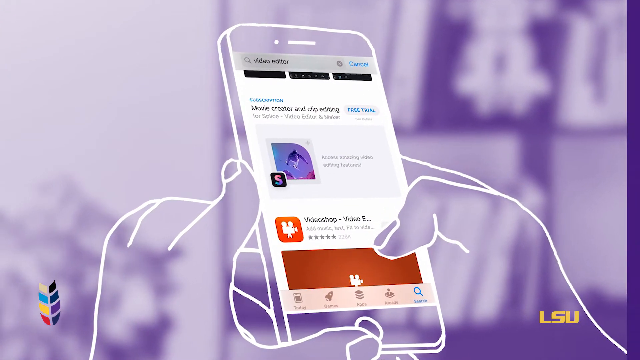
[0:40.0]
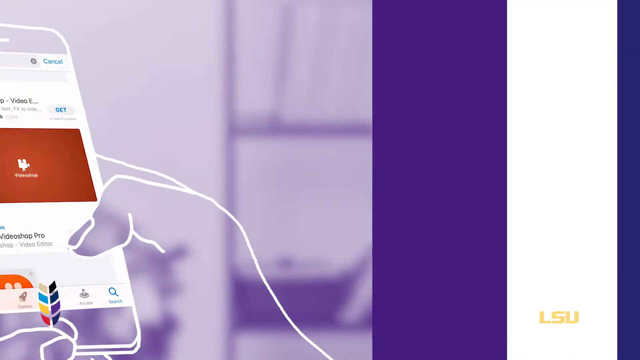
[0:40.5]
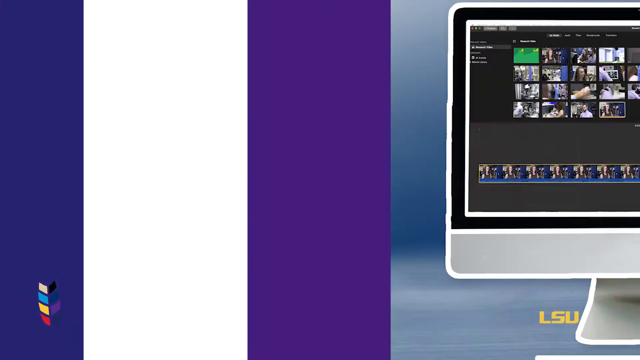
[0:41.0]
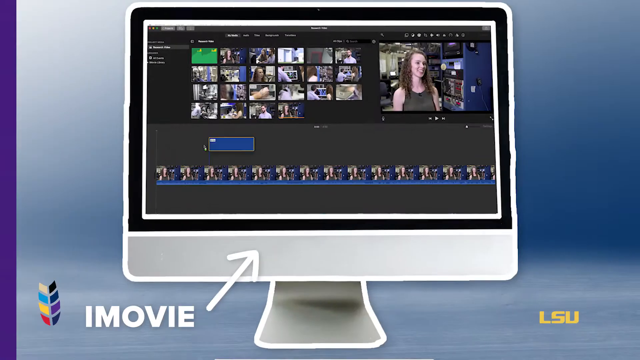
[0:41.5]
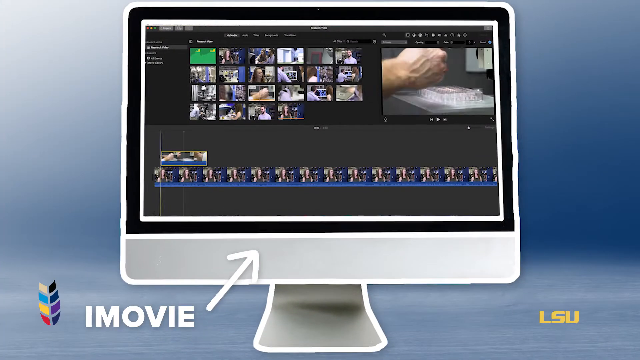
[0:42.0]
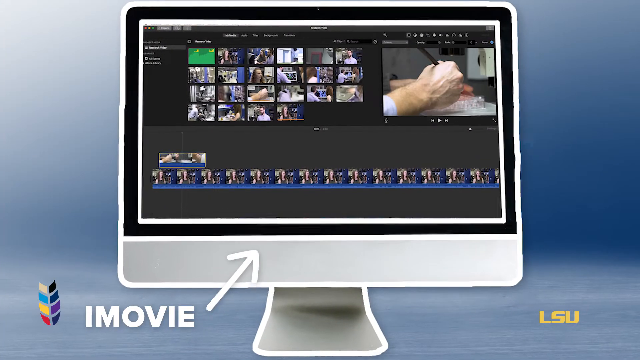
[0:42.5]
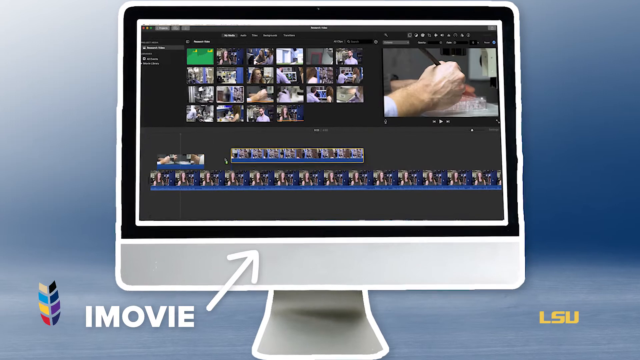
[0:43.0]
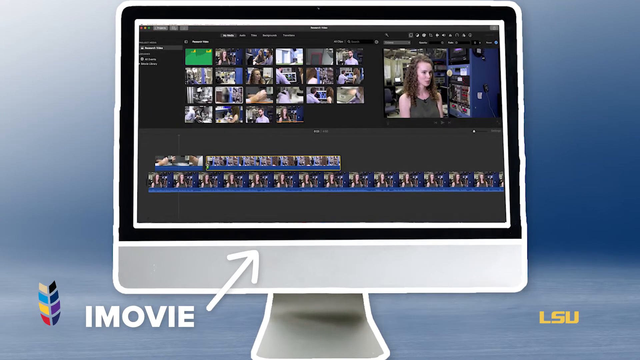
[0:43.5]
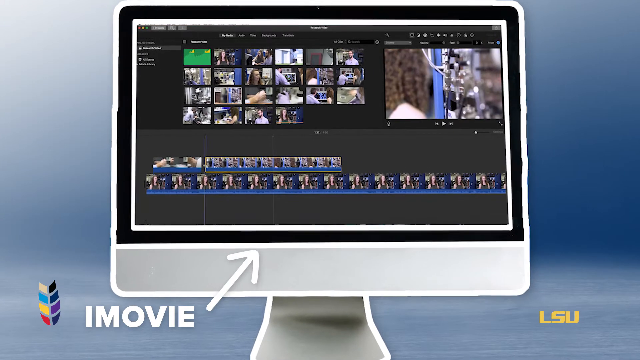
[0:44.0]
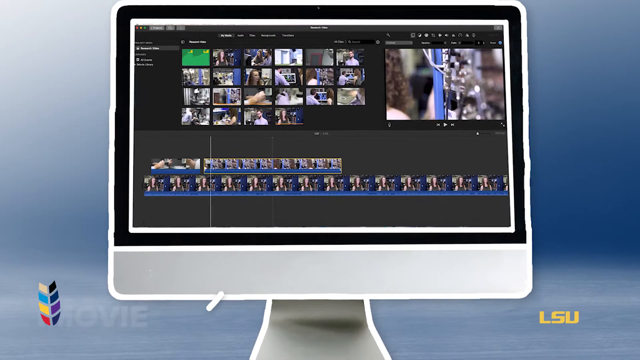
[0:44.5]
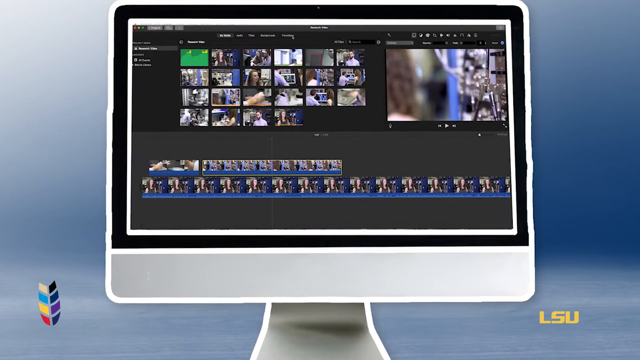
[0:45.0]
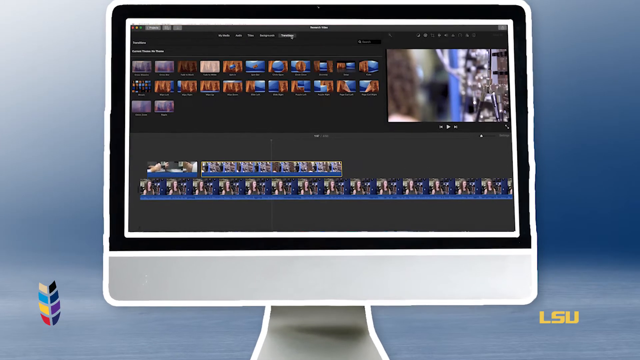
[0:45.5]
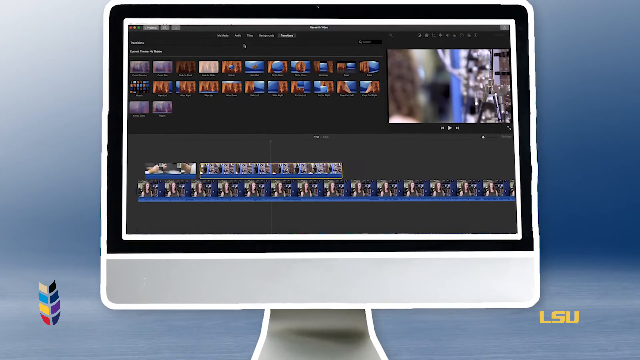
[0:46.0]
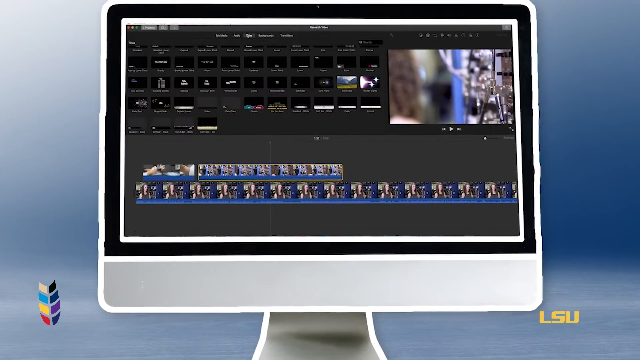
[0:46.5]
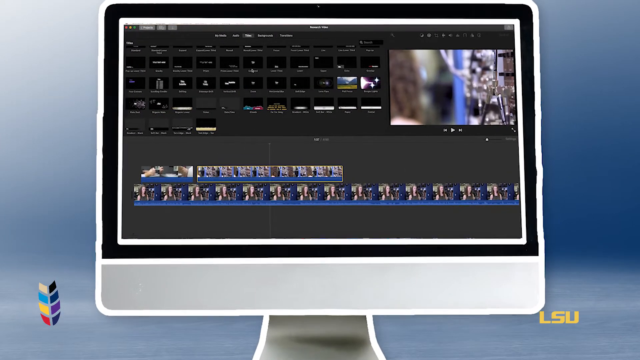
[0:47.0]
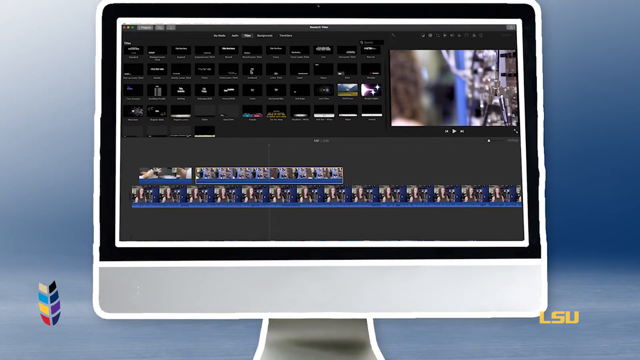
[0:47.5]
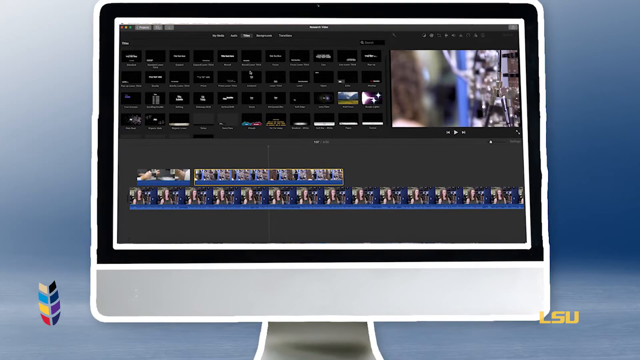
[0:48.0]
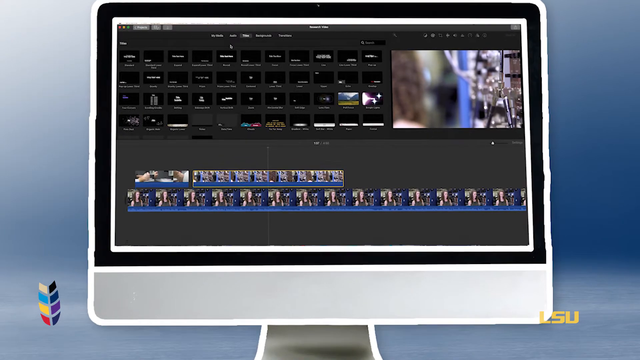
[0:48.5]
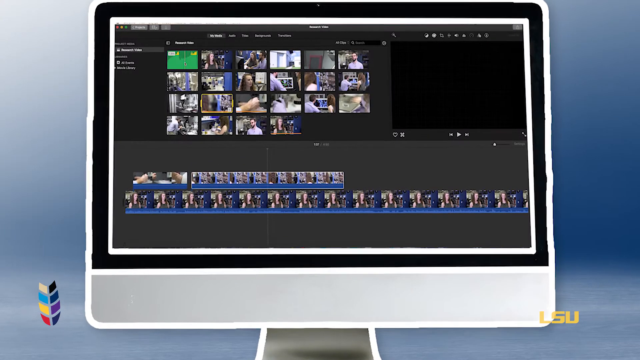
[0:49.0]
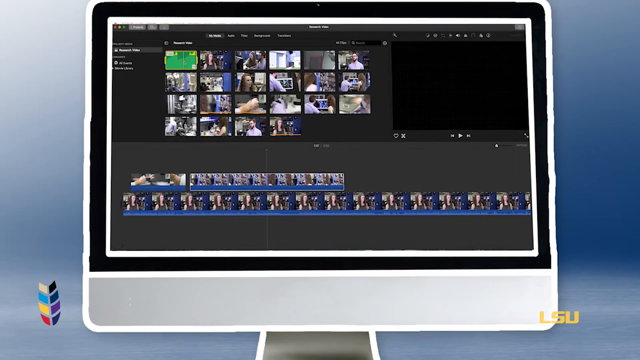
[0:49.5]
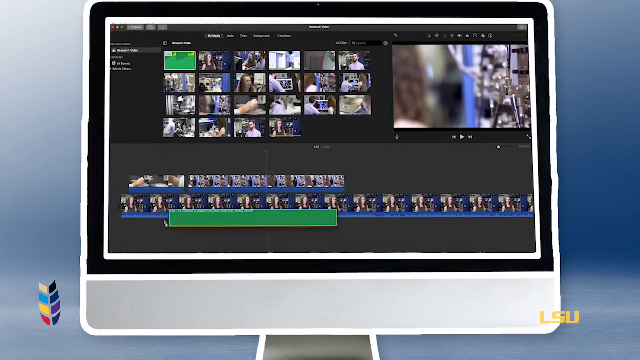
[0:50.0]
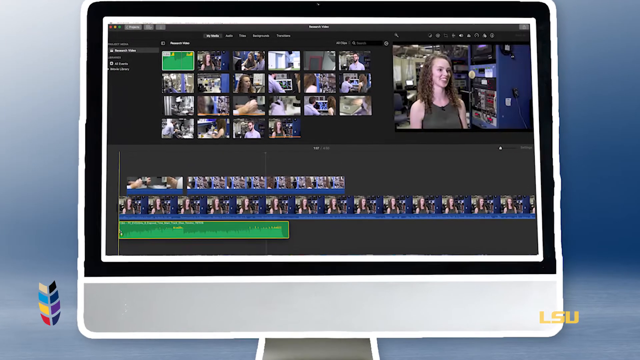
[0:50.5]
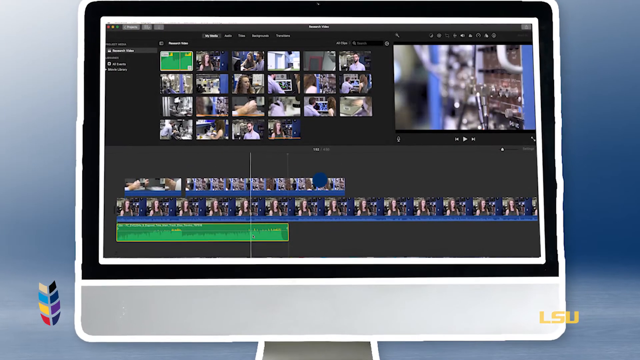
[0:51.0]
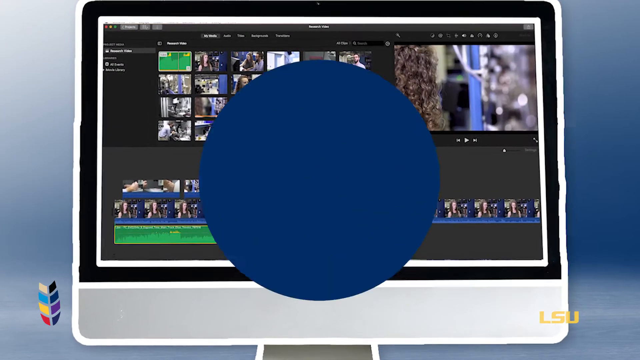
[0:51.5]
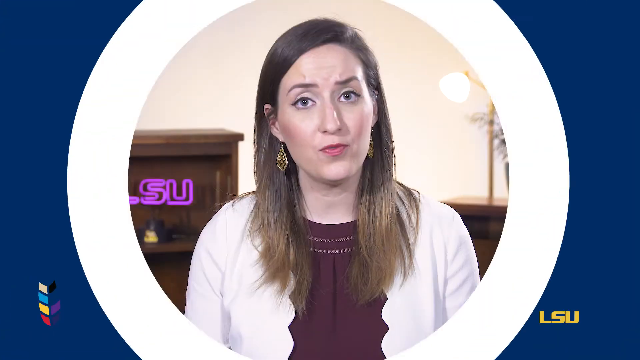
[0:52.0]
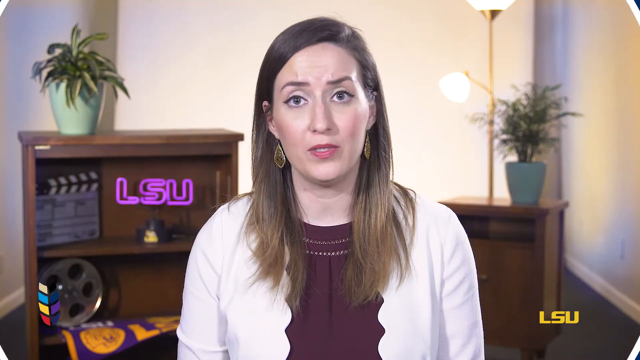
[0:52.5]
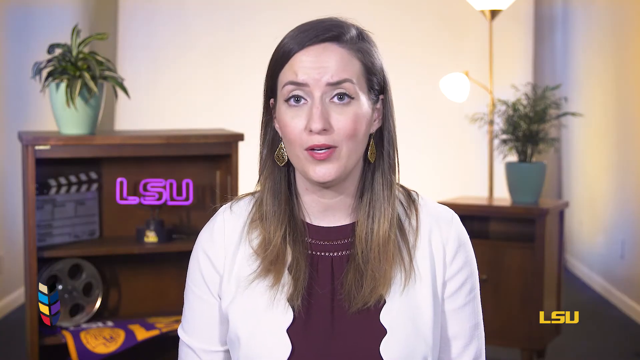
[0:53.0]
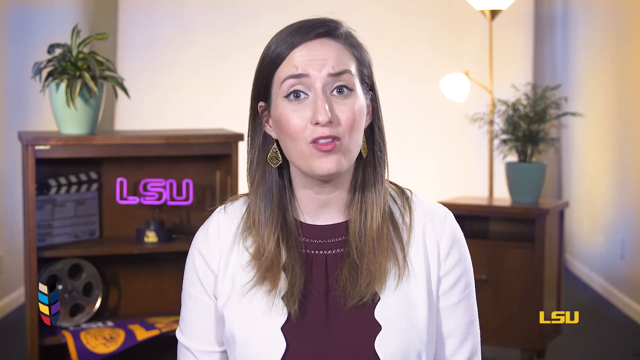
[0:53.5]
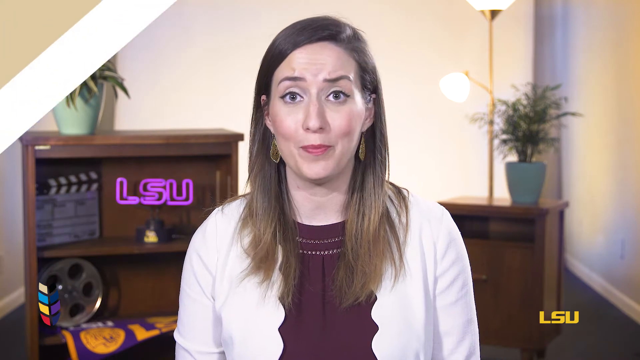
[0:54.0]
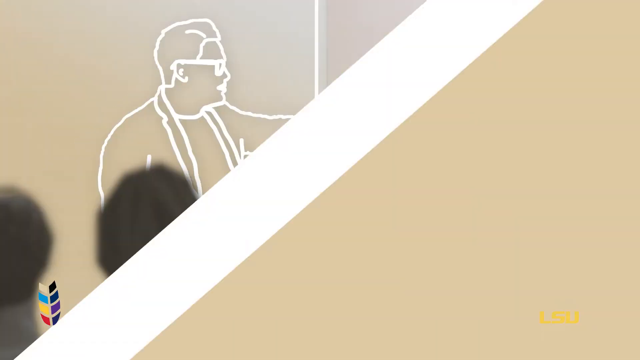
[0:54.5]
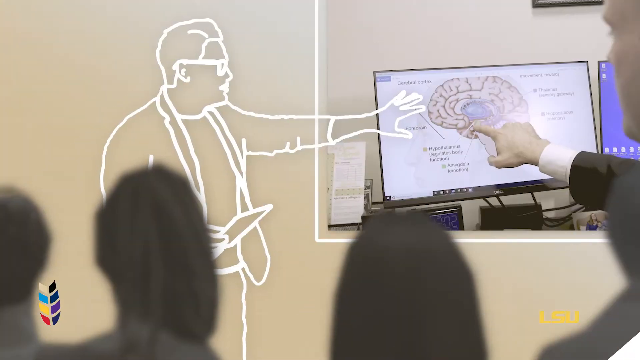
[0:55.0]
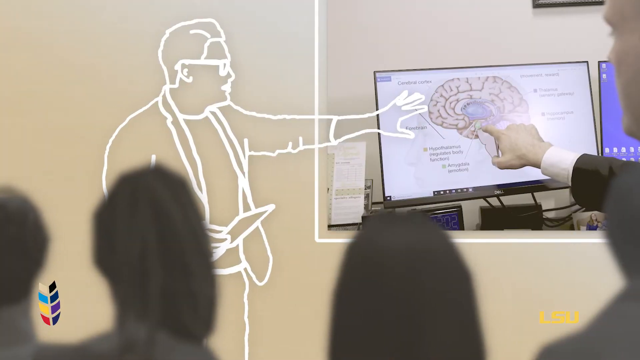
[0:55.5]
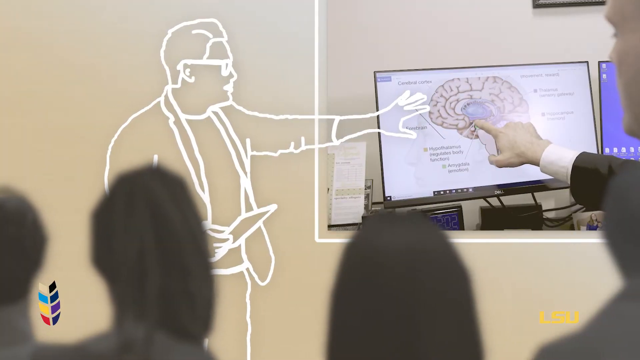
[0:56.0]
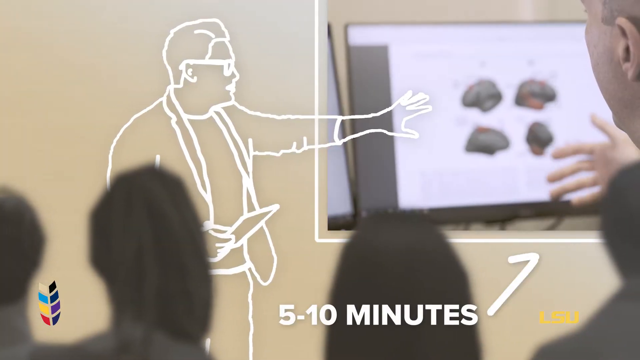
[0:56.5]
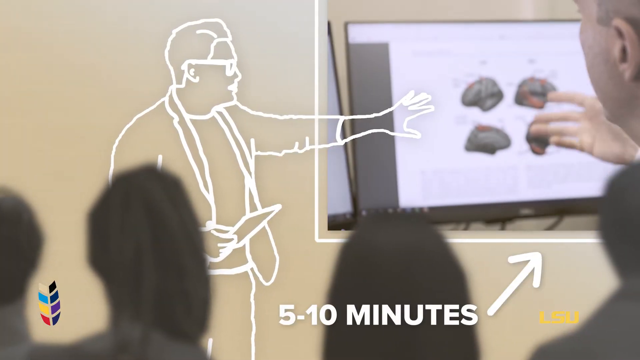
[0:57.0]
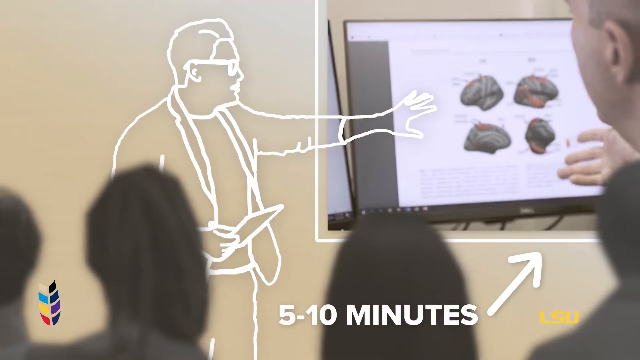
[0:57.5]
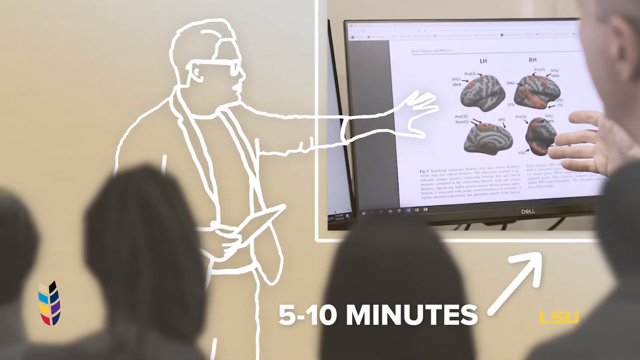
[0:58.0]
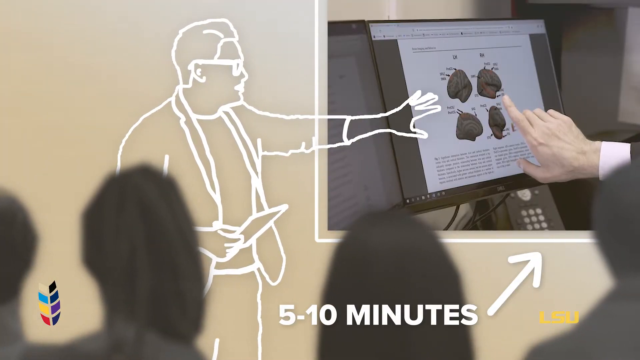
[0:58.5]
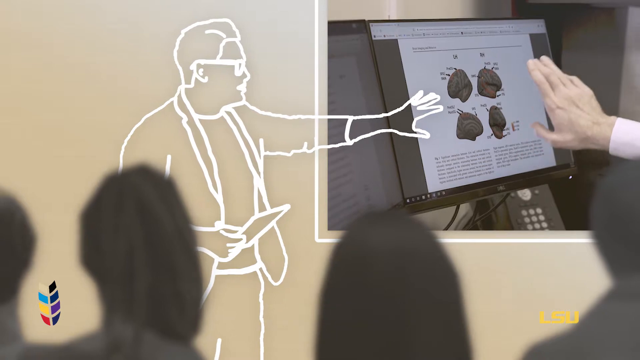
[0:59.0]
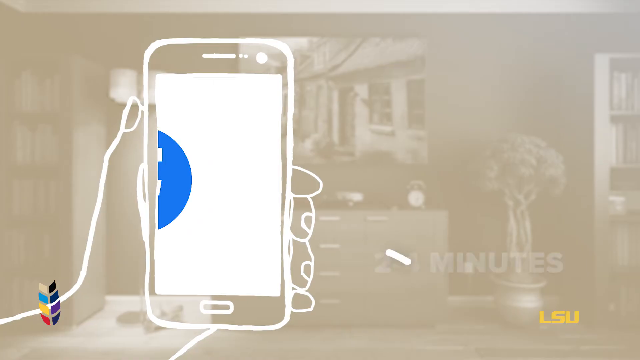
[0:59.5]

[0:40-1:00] An animation shows a hand holding a cell phone and scrolling through screens. The video cuts to another animation of a laptop screen with pointing and clicking on a website; it looks like someone is using an application to edit a video. It then cuts to the narrator, the white woman with brown hair and blue eyes in a burgundy blouse and white cardigan, who is saying something. Because of the quick cut, she may be talking over the following animated drawing, though it is hard to tell: someone appears to be teaching or explaining something, with a hand making gestures over images on a computer screen. The images on that screen appear to be scientific or medical in nature.